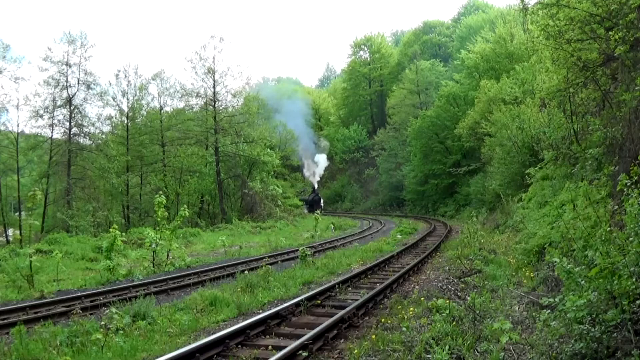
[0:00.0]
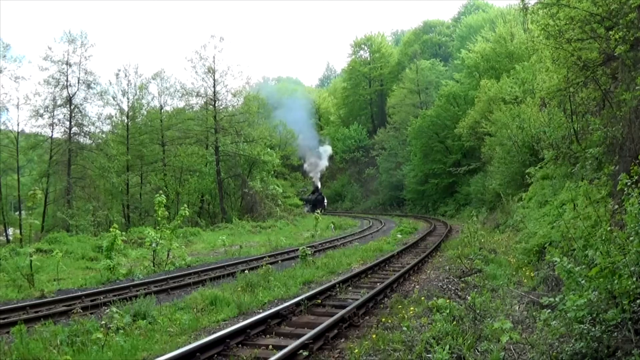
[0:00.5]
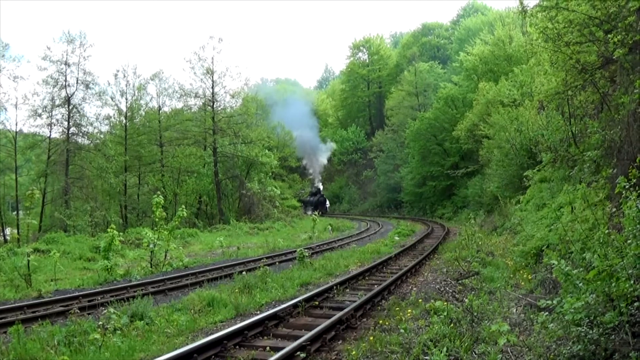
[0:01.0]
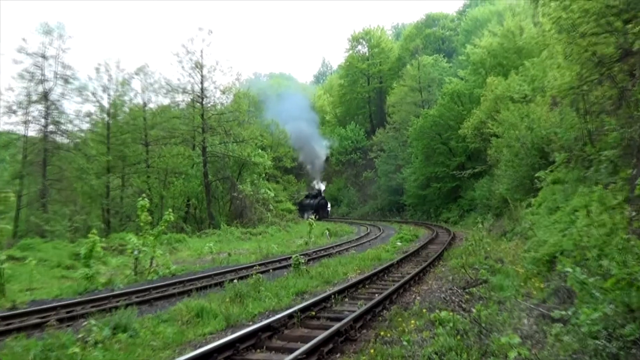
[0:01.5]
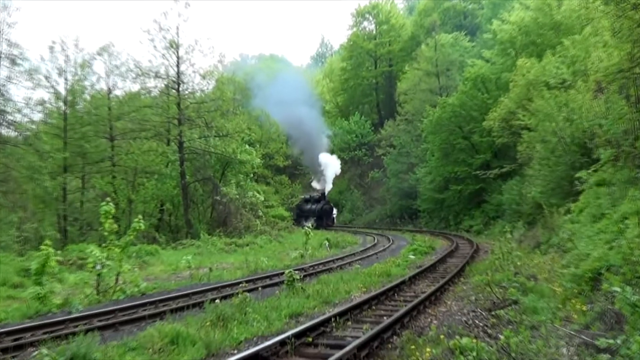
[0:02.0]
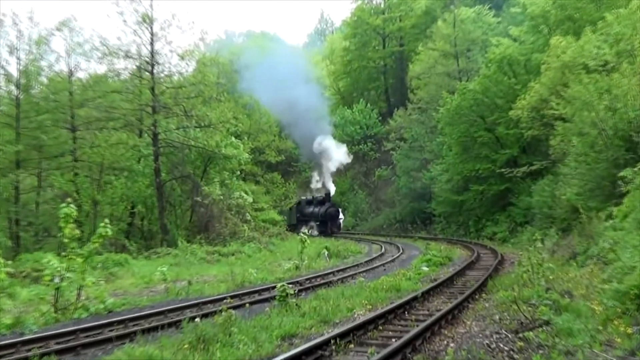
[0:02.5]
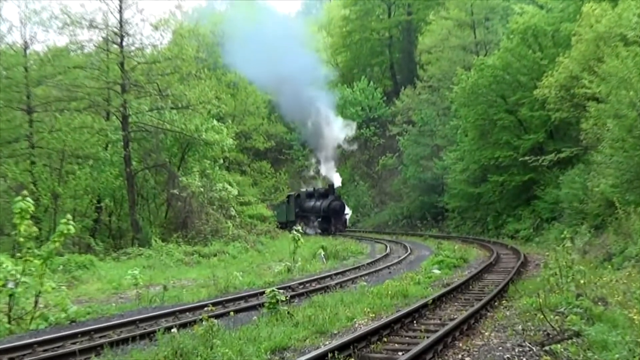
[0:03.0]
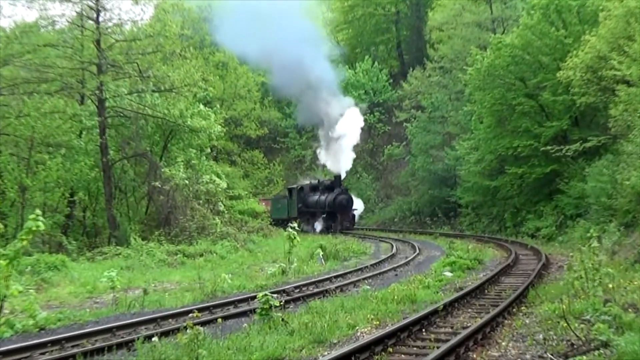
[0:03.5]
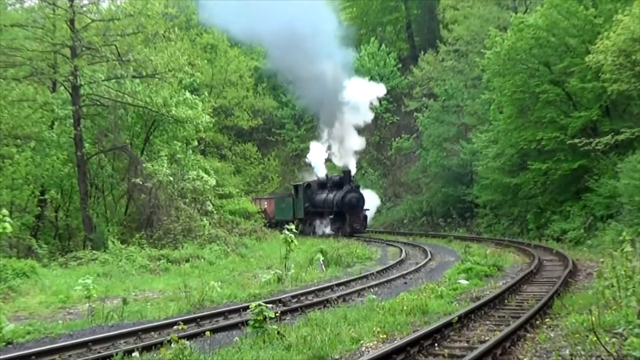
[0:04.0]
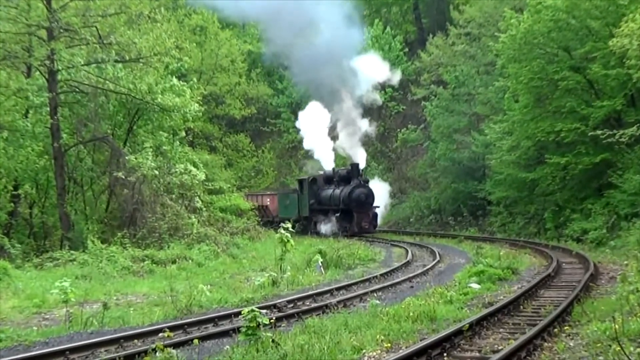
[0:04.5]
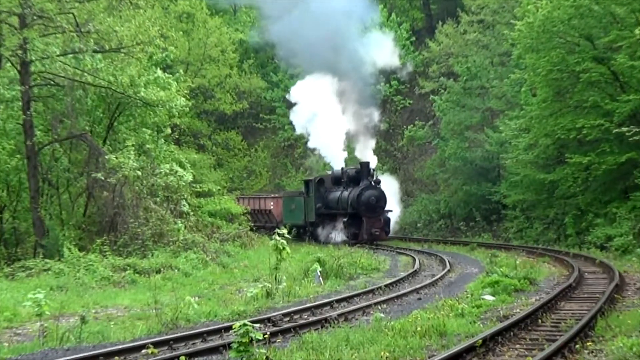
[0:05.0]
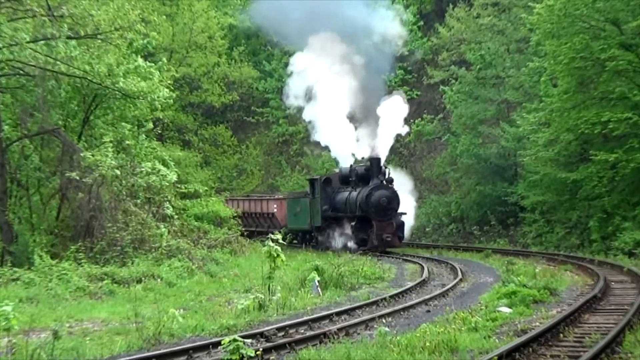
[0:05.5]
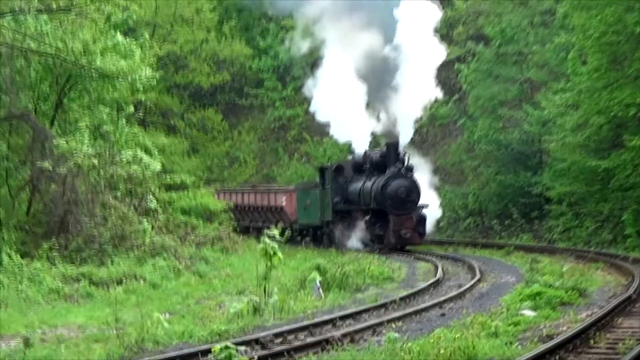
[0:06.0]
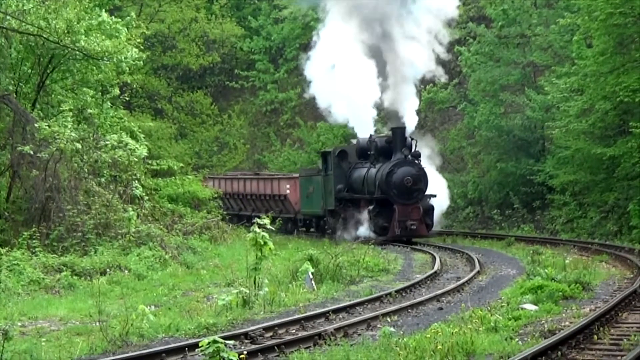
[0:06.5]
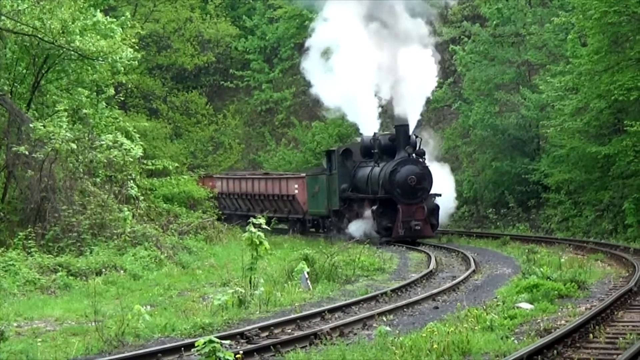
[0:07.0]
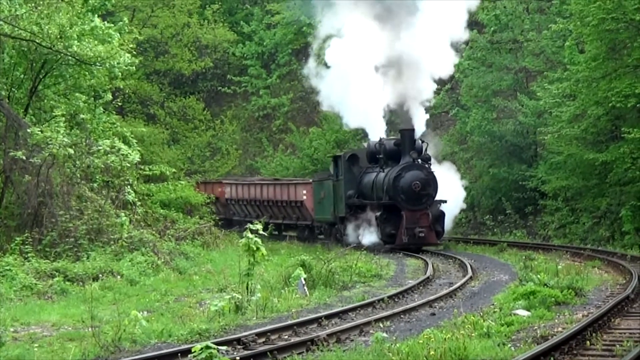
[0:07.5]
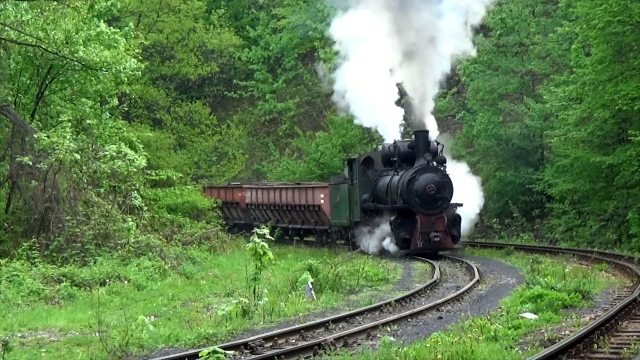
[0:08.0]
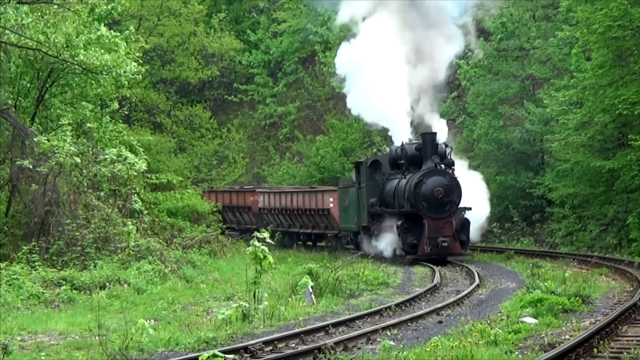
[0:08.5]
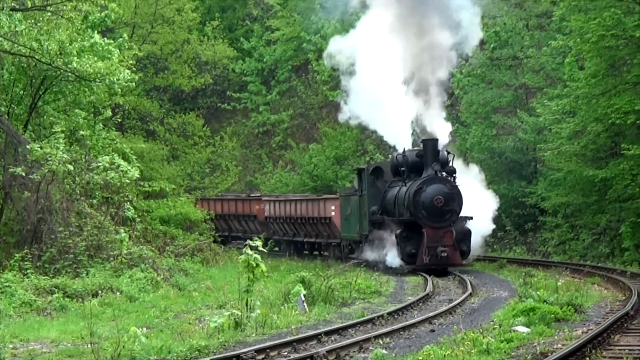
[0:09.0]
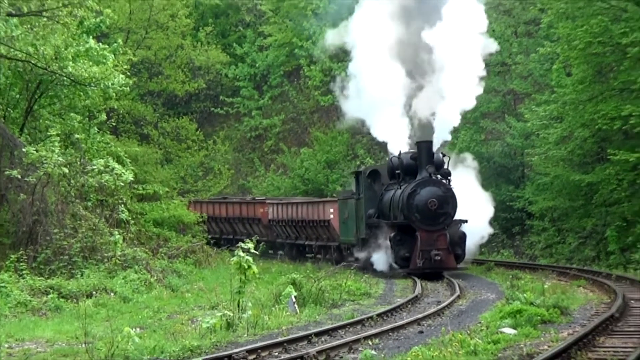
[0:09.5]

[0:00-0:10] Two parallel train tracks run through a forest. On the left track, an old steam engine comes forward, pulling old passenger cars through the forest and billowing white smoke into the air as it chugs along. The trees are green, the weather is fair, and the shrubbery grows thick and wild.